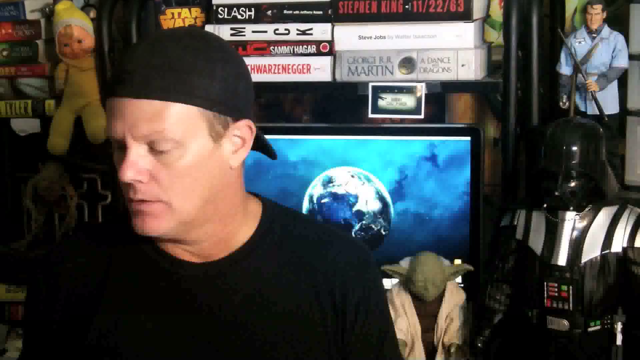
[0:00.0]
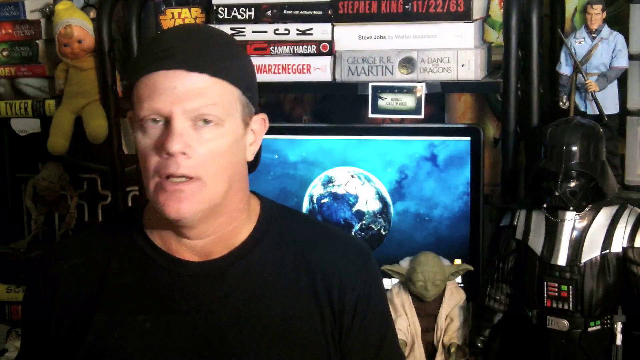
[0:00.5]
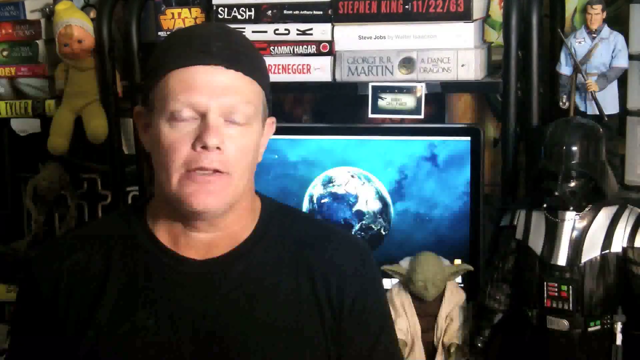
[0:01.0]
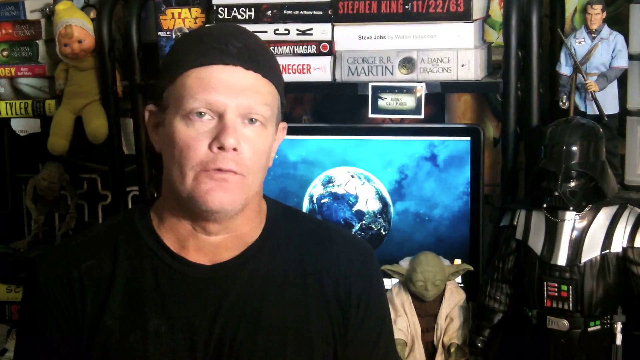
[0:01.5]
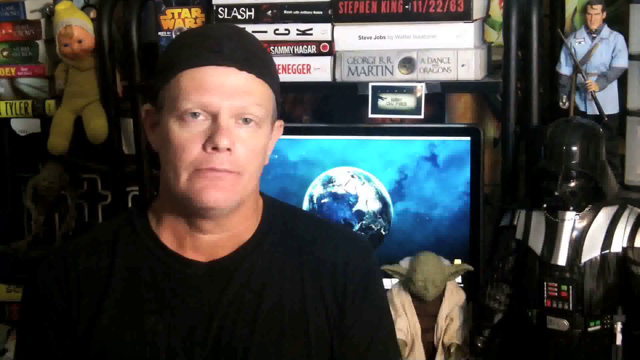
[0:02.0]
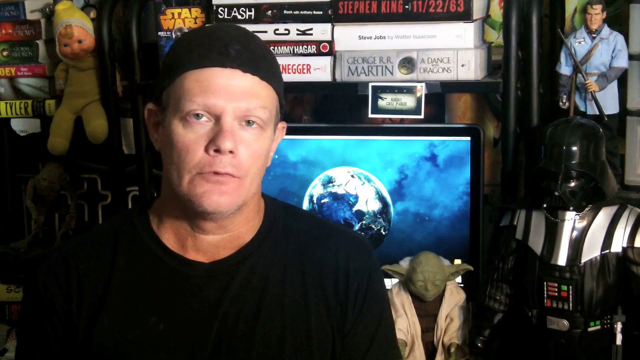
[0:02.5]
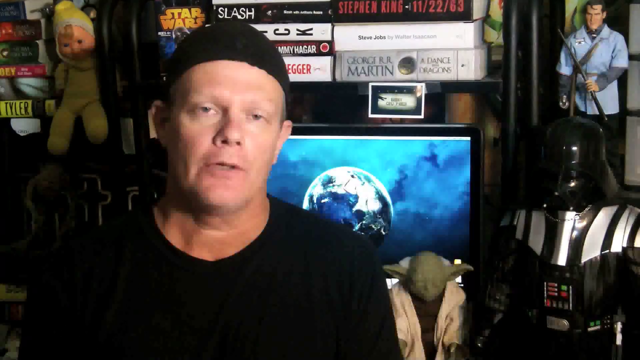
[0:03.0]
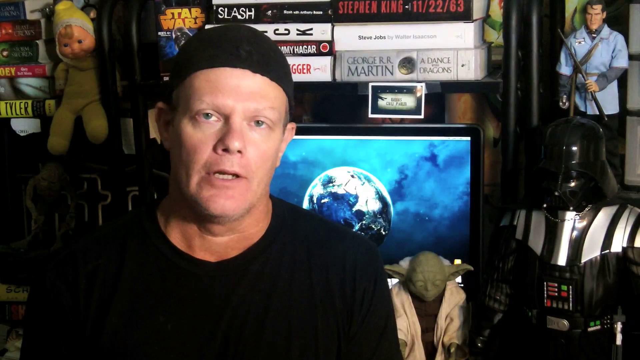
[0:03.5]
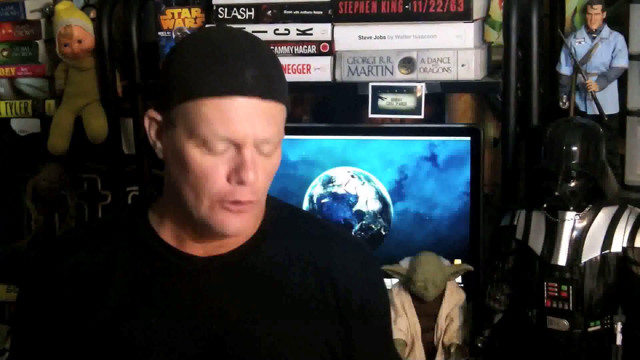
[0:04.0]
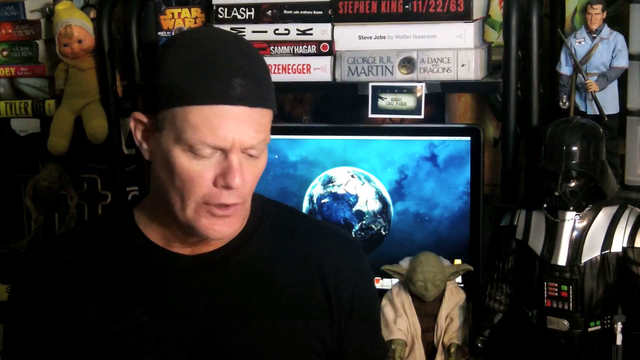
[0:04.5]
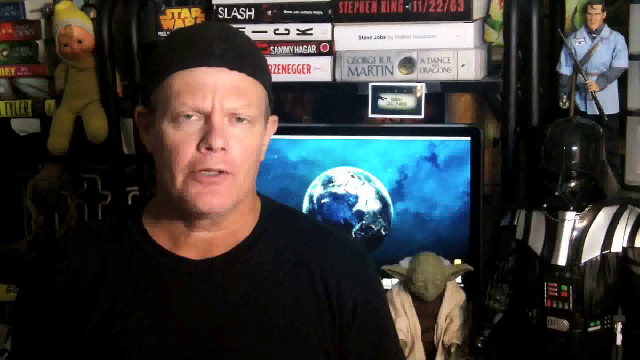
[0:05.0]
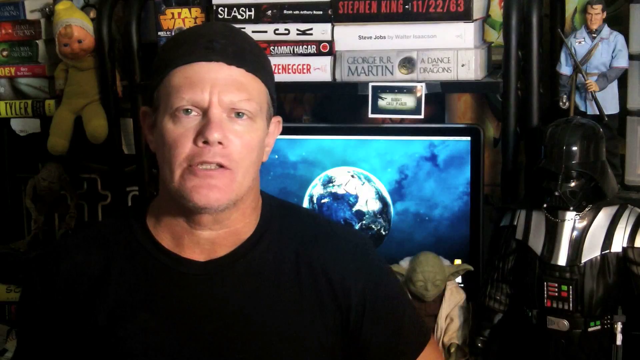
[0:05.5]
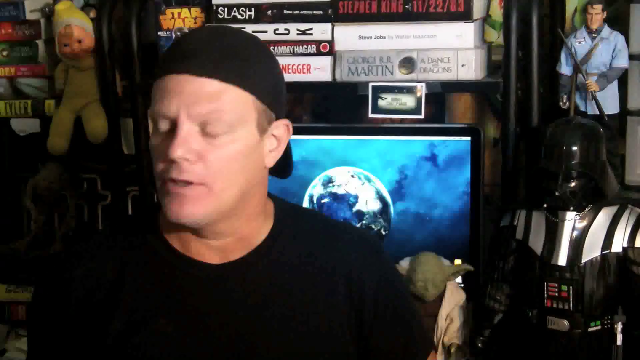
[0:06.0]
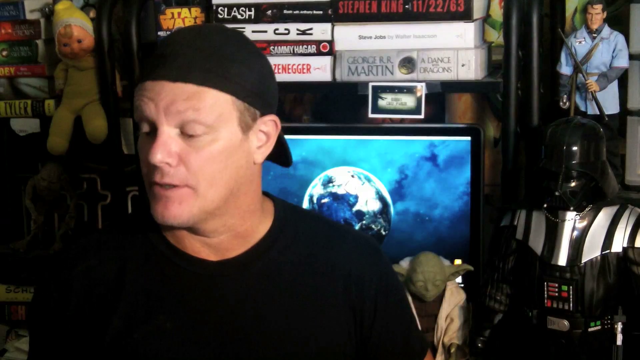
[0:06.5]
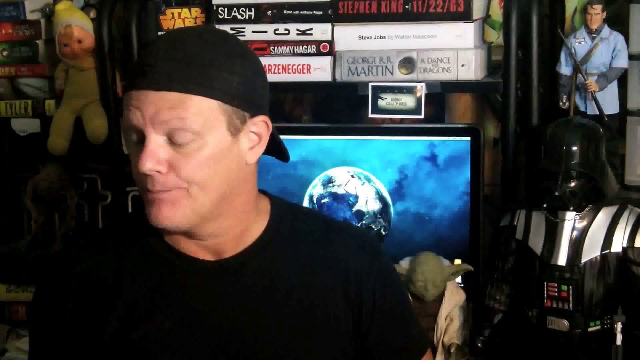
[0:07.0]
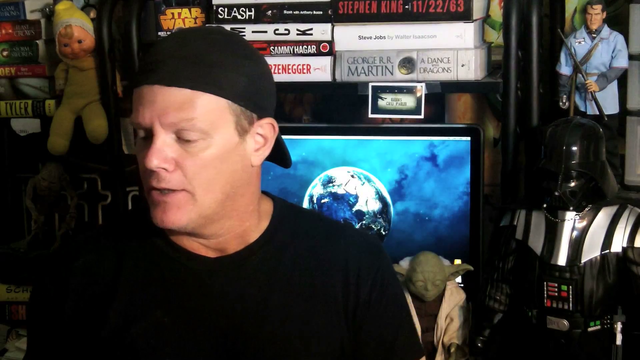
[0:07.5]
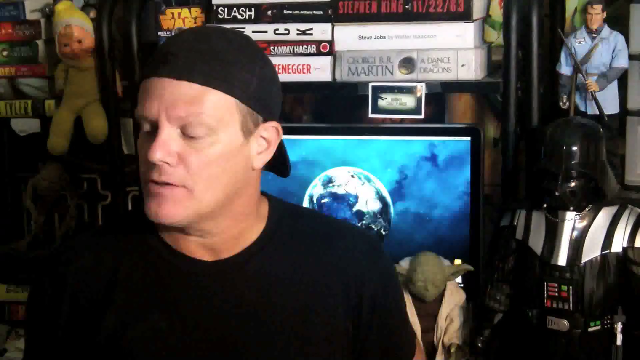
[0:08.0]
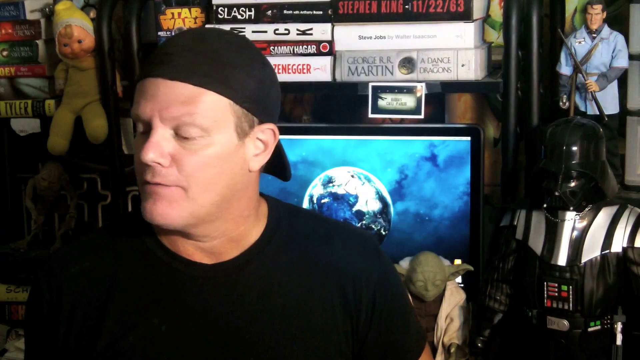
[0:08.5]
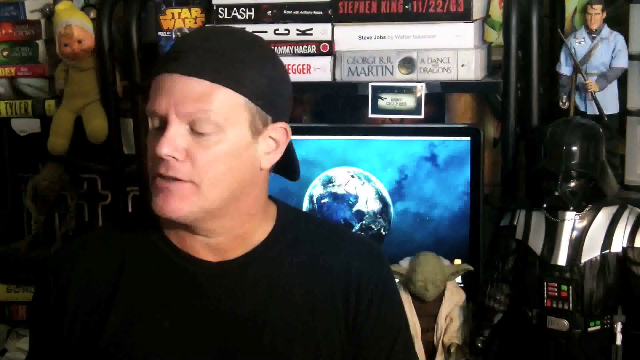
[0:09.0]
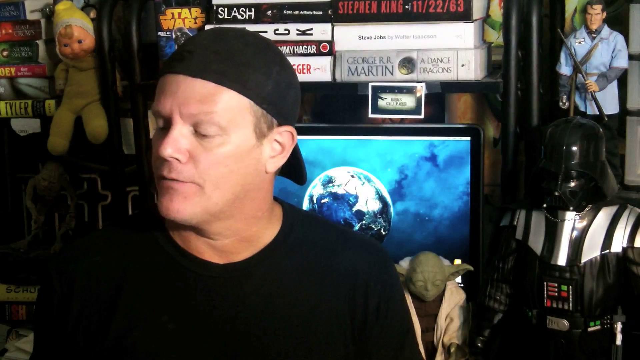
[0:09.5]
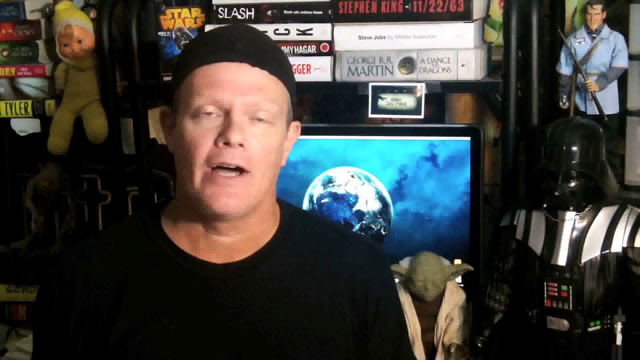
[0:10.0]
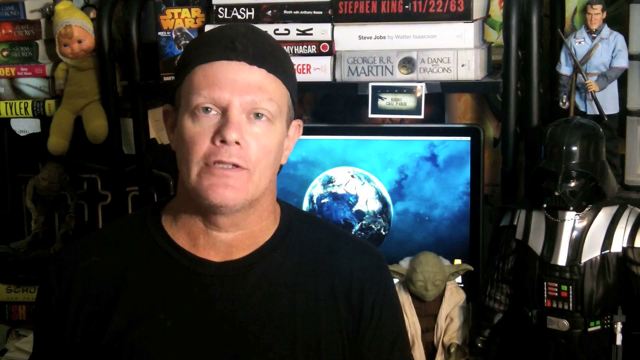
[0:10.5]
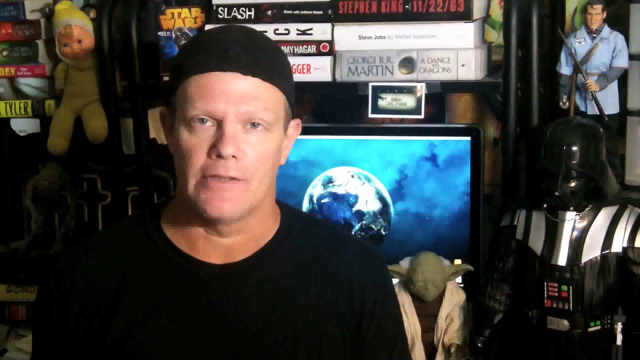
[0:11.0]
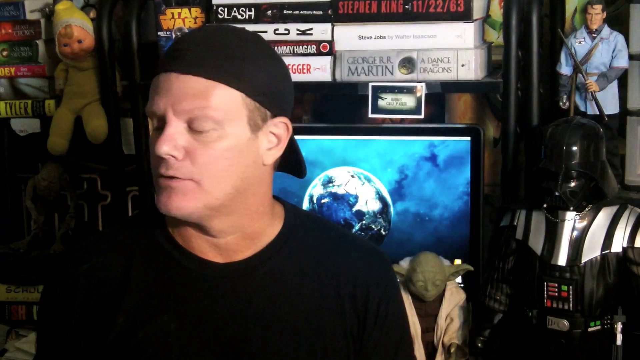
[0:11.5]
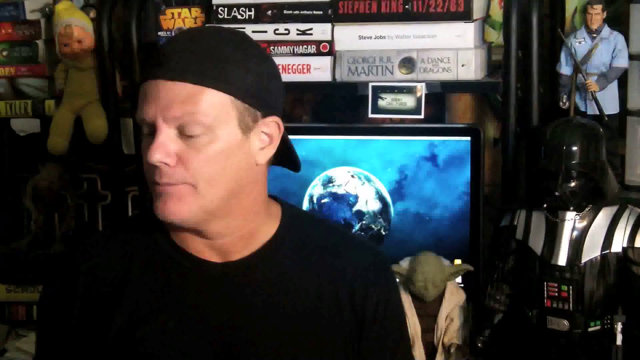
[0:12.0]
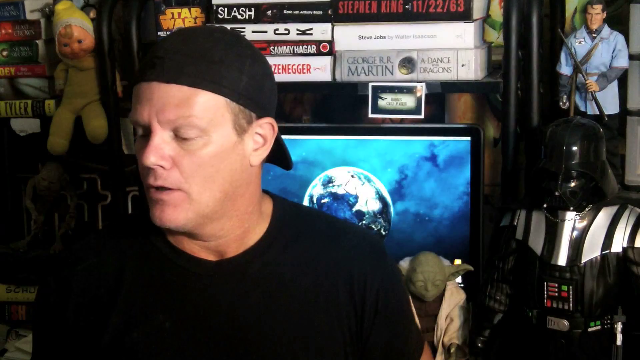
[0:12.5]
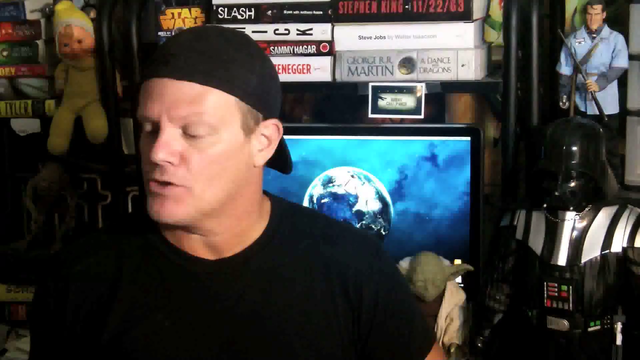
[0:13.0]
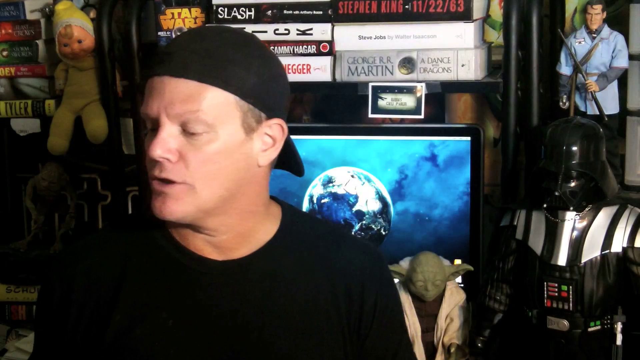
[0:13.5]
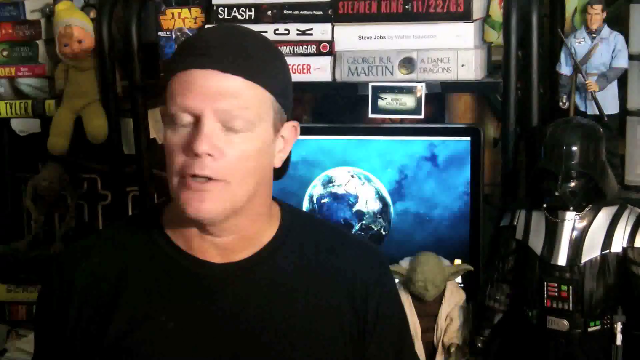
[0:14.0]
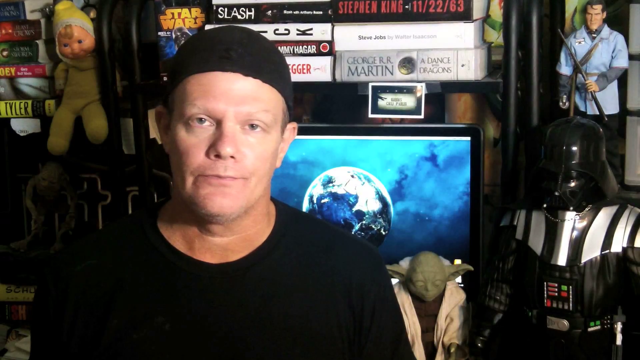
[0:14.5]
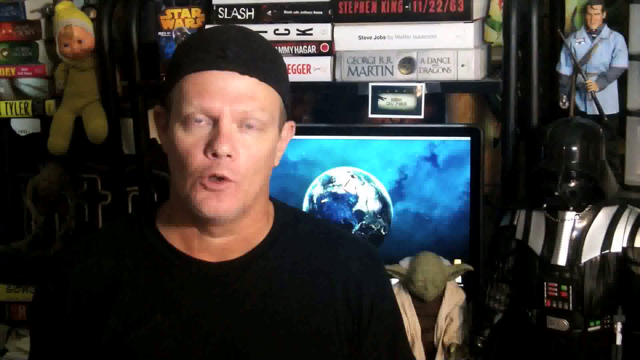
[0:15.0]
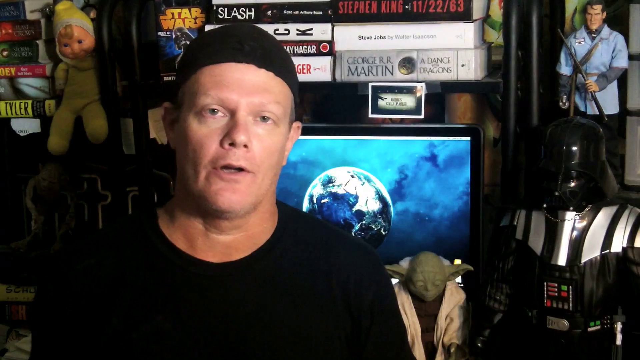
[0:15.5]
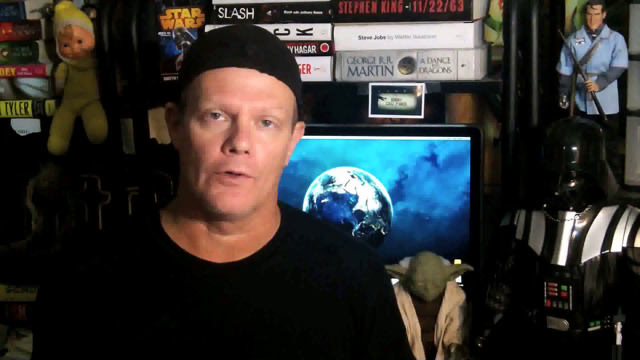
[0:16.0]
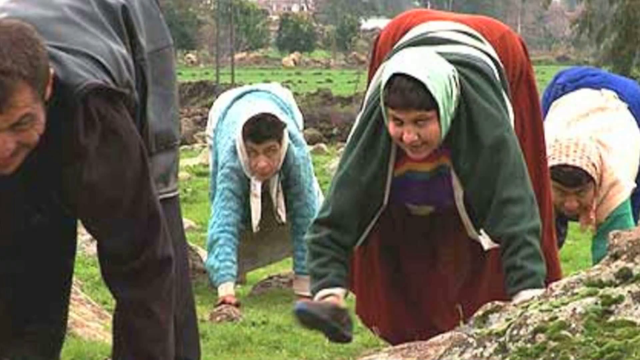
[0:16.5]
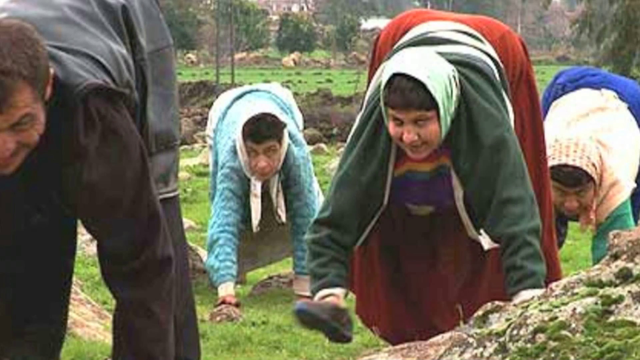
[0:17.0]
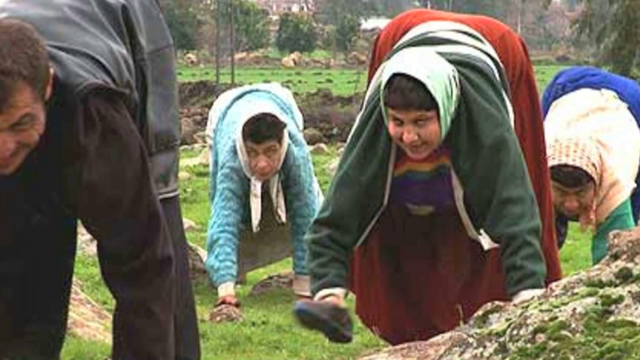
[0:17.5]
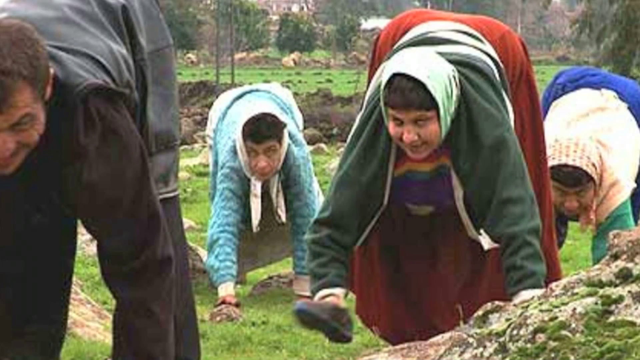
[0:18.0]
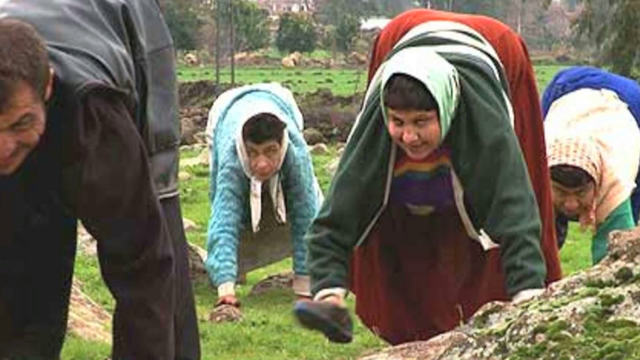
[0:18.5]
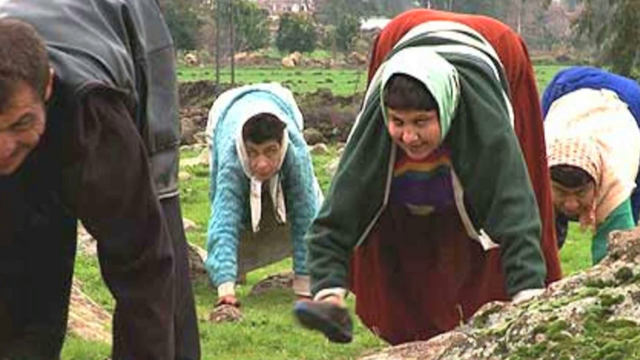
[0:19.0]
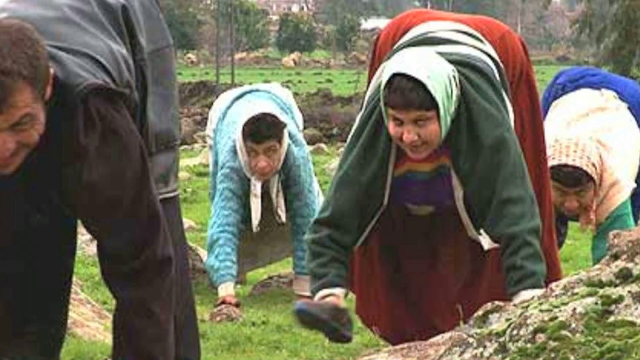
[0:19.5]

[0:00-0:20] A man is in a room, wearing a black hat and a black t-shirt. Behind him is a figure of Darth Vader, and there is a TV screen showing a big earth. There are other toys, including a toy on the left, and behind him are a lot of discs for games. A George R. R. Martin fantasy book is visible, and there is also a Yoda behind him. After some time the man looks left and looks right; he has no mustache or beard. He then talks. Next, a group of four people is shown sitting down on their hands, with shoes on their hands.